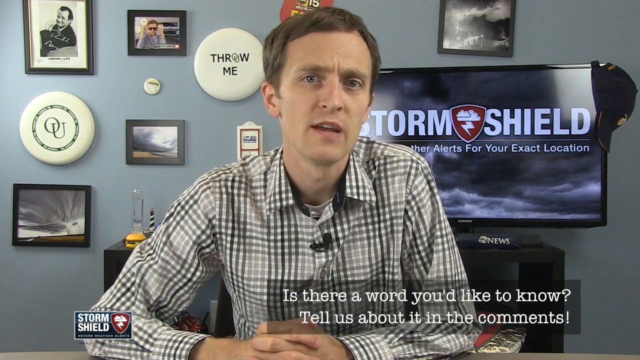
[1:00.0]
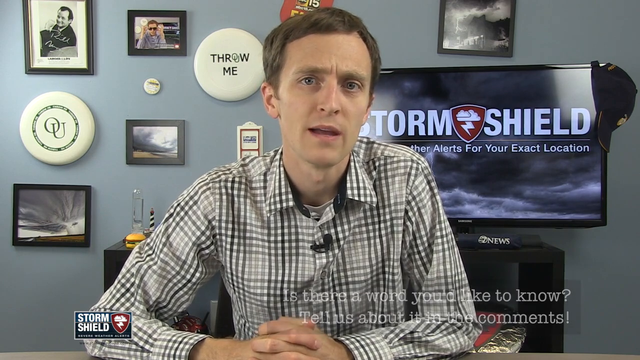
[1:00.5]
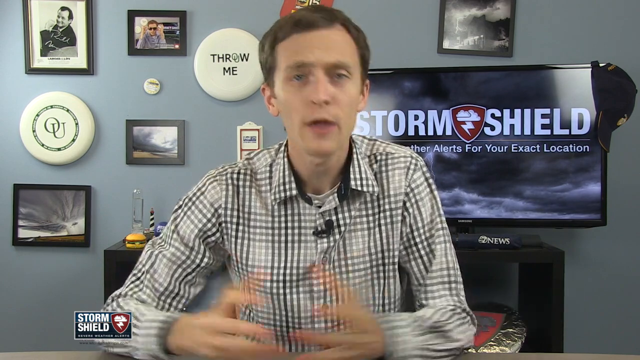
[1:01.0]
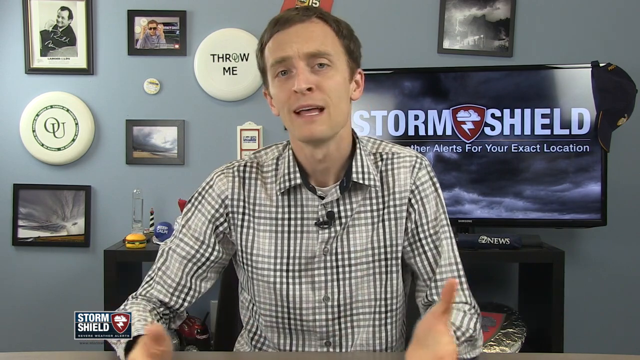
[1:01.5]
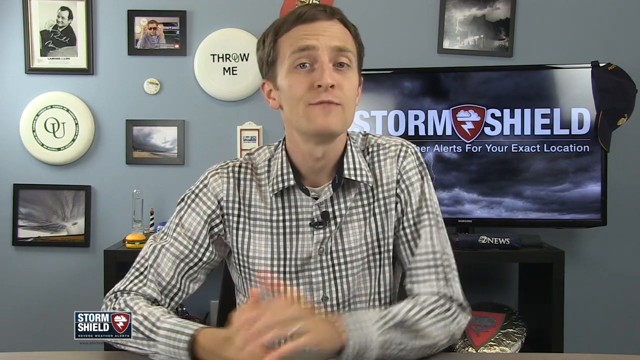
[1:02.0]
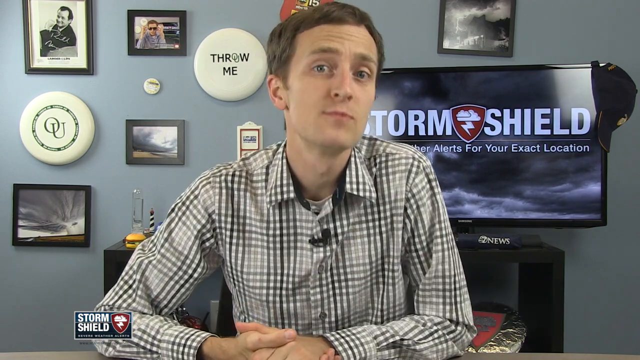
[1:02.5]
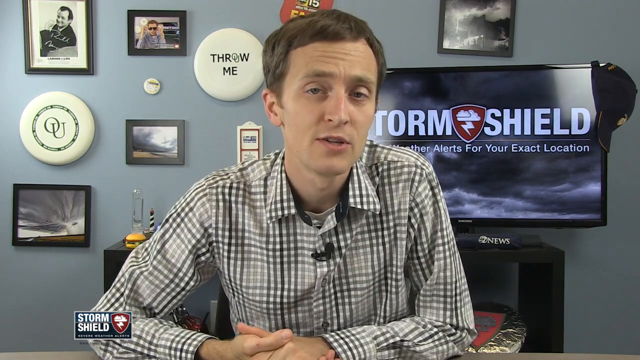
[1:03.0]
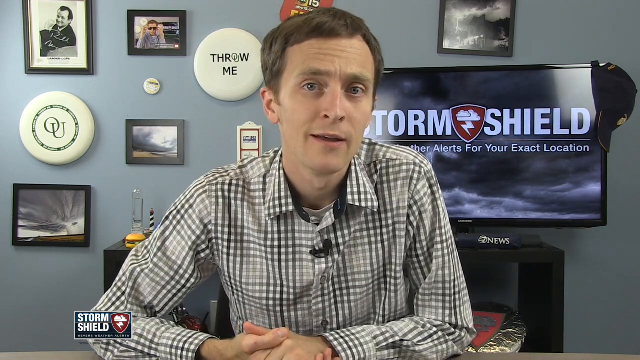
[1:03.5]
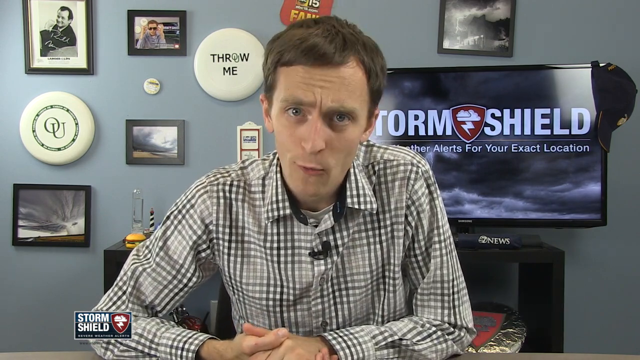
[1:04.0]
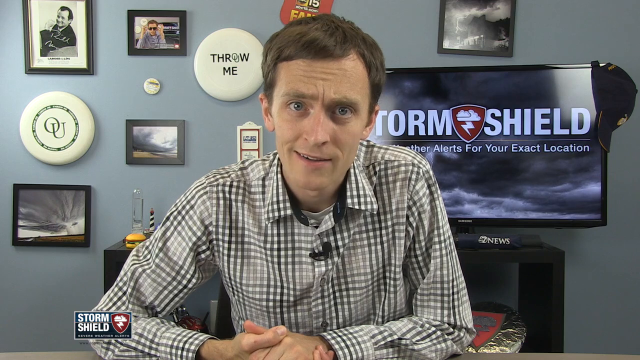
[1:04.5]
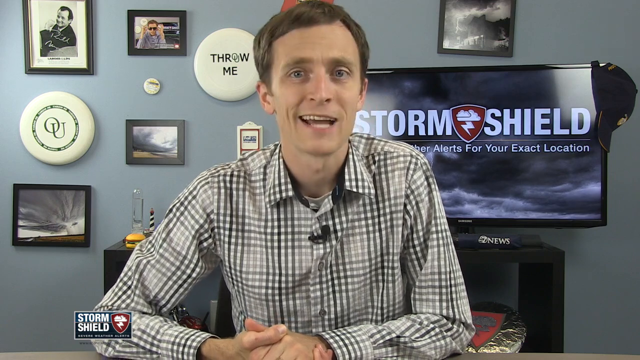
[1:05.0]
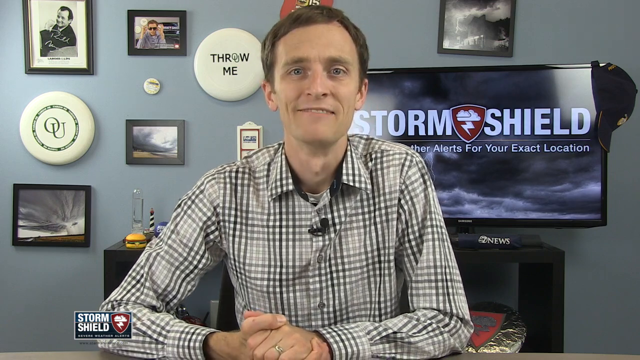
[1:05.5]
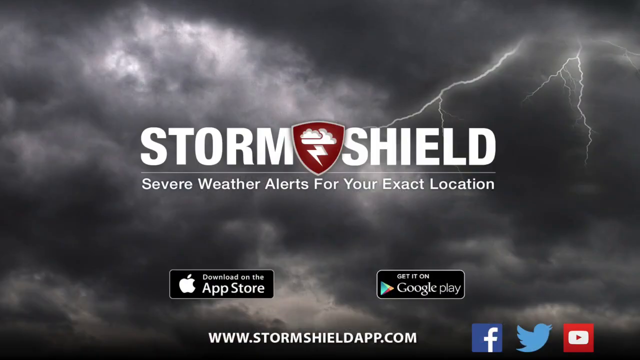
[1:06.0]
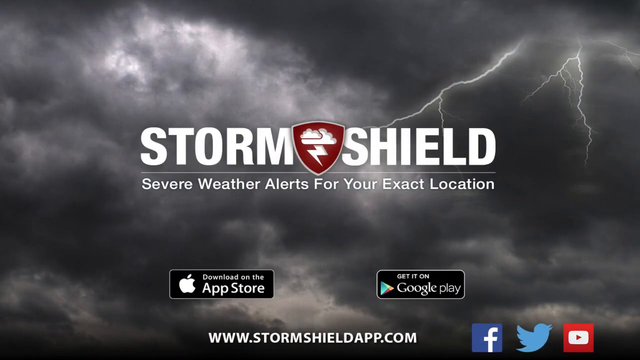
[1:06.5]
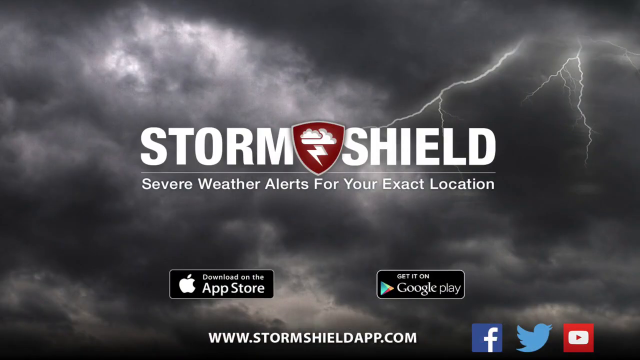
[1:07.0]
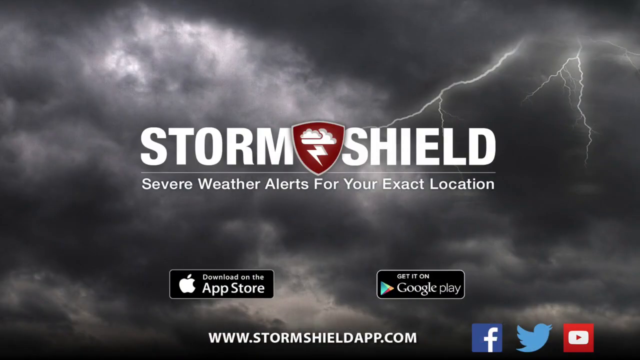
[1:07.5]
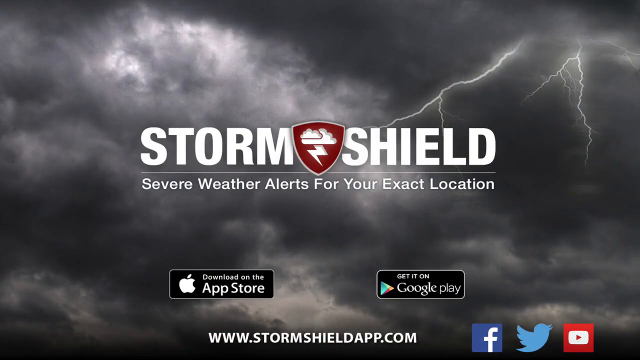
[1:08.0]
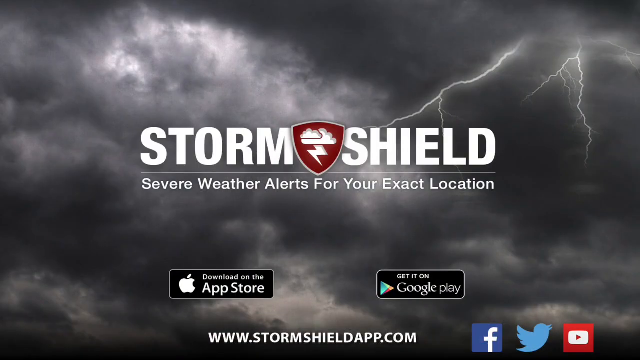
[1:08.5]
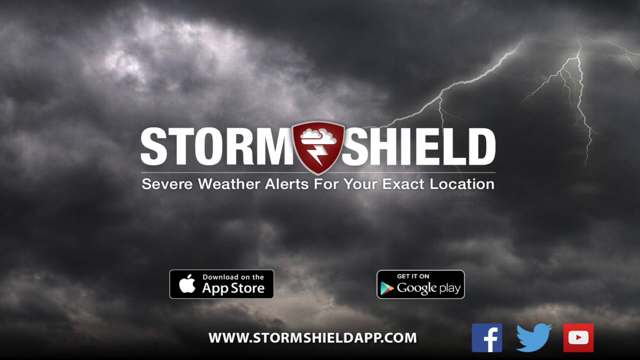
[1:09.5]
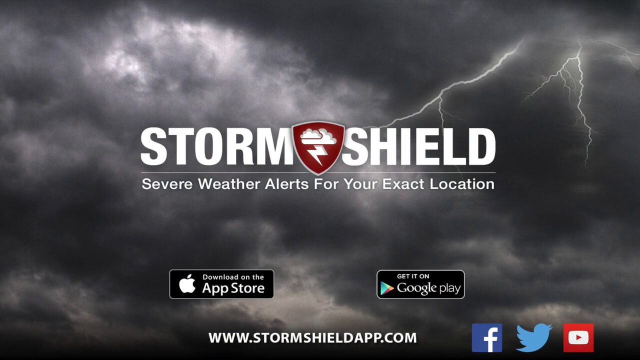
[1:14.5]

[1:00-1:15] Jason speaks from the office while the screen shows "is there a word you'd like to know tell us about it in the comments." He is sitting at a desk, delivering commentary. Over his right shoulder, what looks to be a TV screen still shows Storm Shield with "weather alerts for your exact location." On his wall are the Frisbee that says "throw me," another Frisbee that says "OU," and a lot of other paraphernalia. The video then switches to a screen reading "storm shield severe weather alerts for your exact location," showing how to download it on the App Store and get it on Google Play, along with "www.stormshieldapp.com."